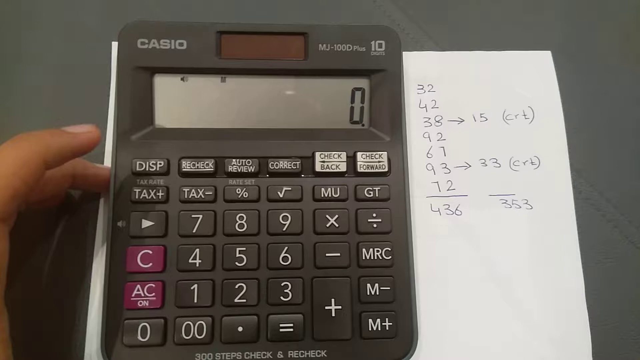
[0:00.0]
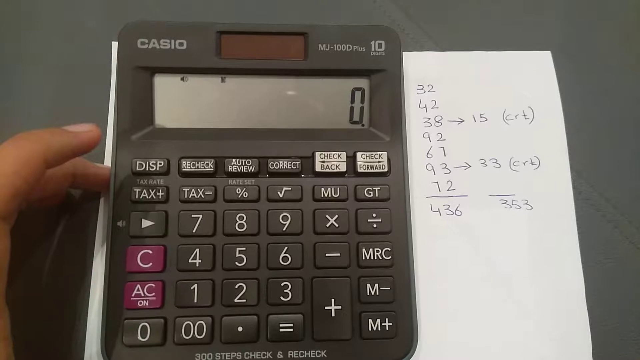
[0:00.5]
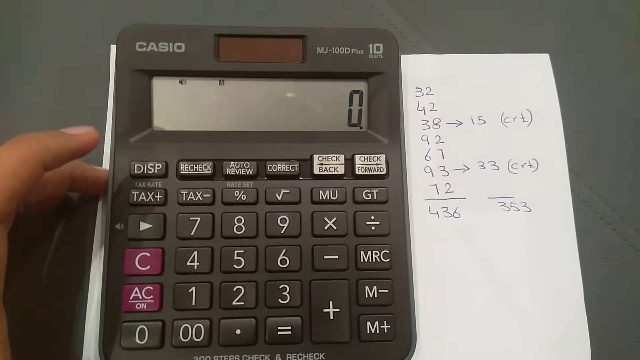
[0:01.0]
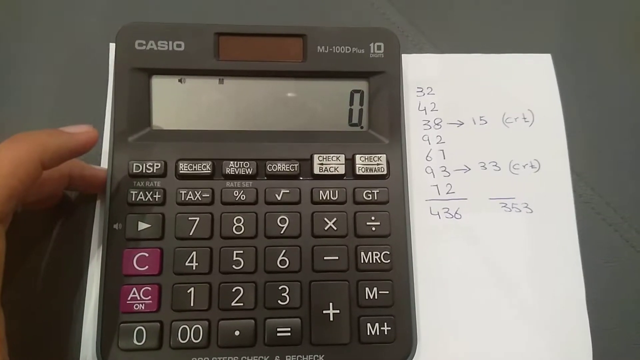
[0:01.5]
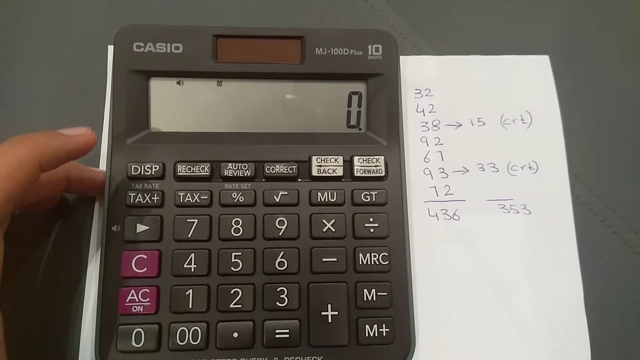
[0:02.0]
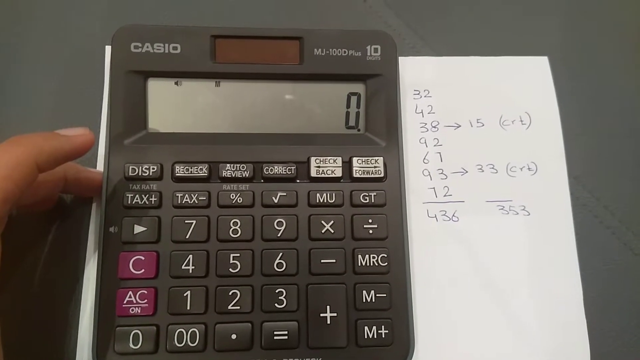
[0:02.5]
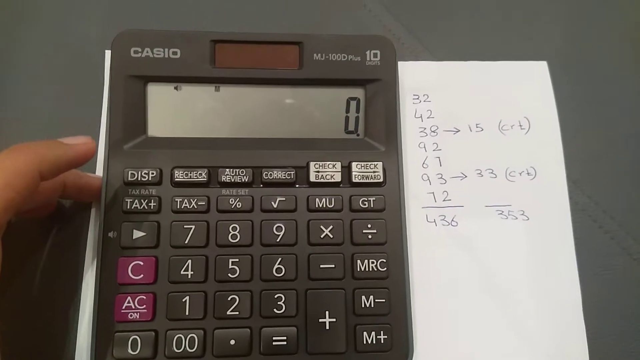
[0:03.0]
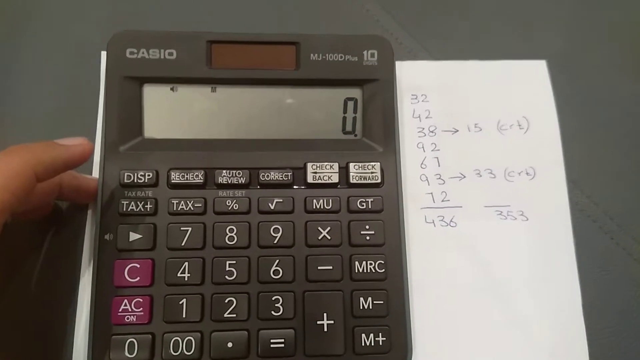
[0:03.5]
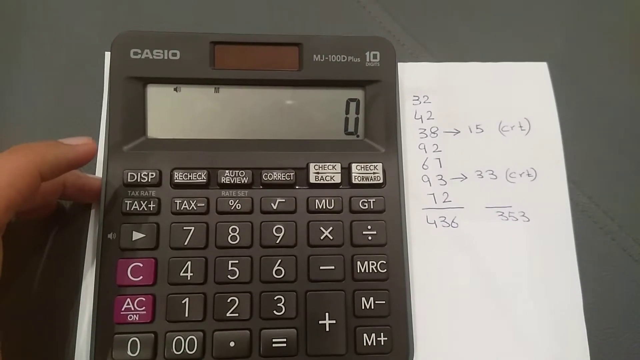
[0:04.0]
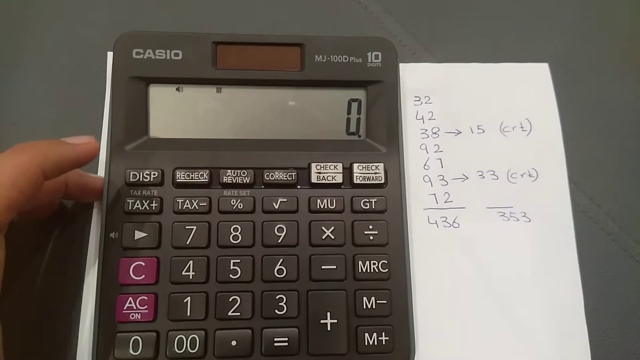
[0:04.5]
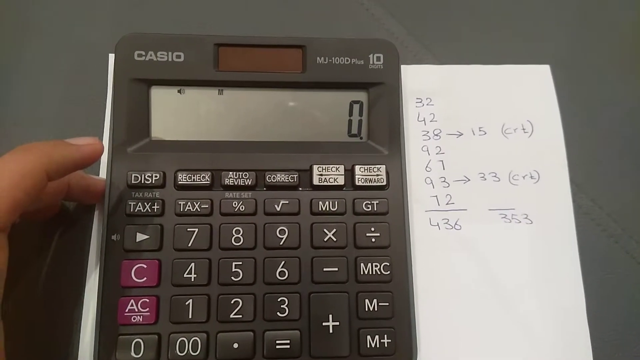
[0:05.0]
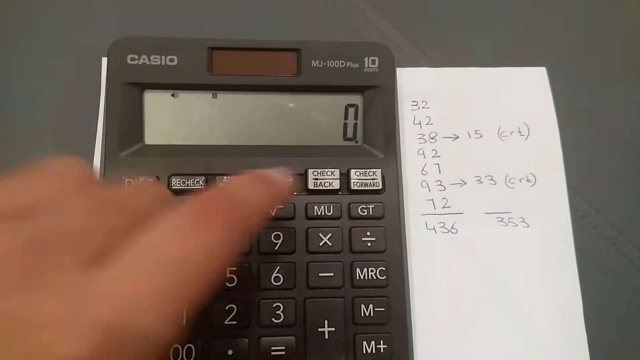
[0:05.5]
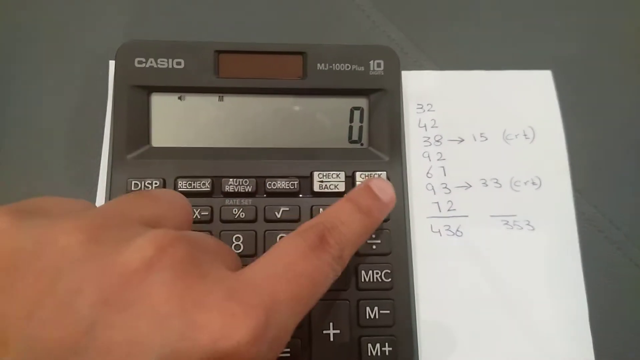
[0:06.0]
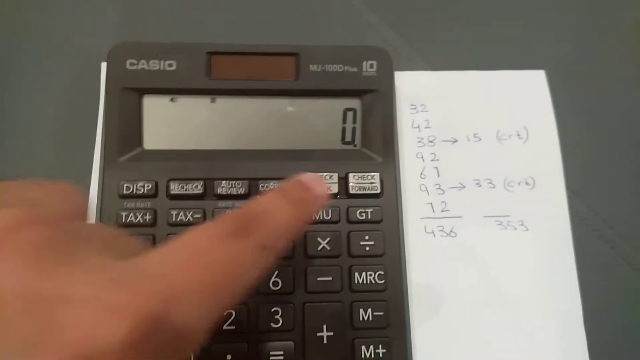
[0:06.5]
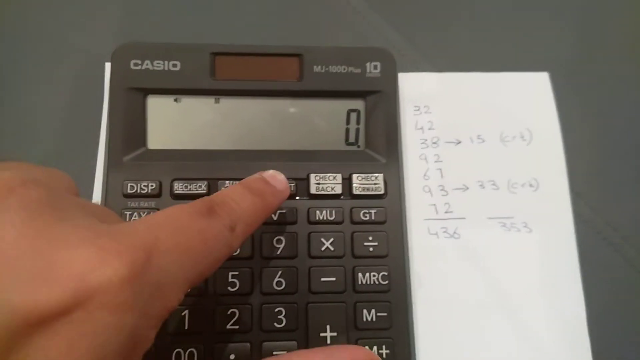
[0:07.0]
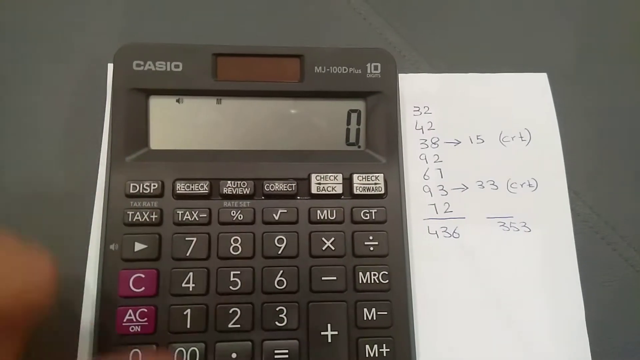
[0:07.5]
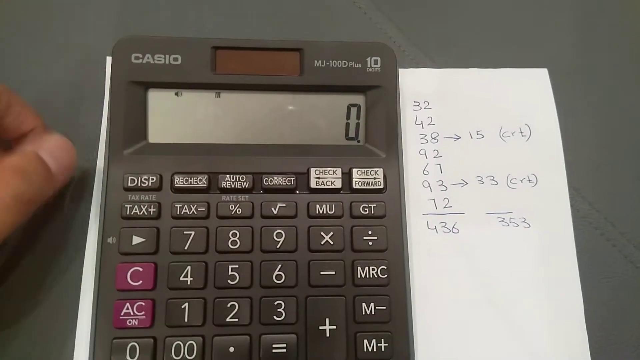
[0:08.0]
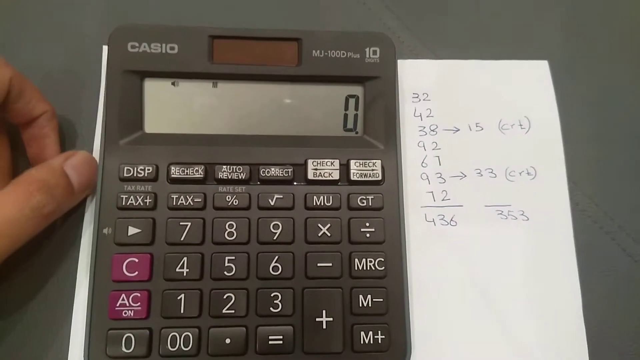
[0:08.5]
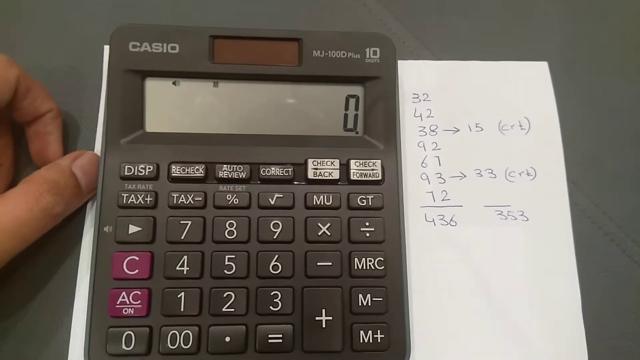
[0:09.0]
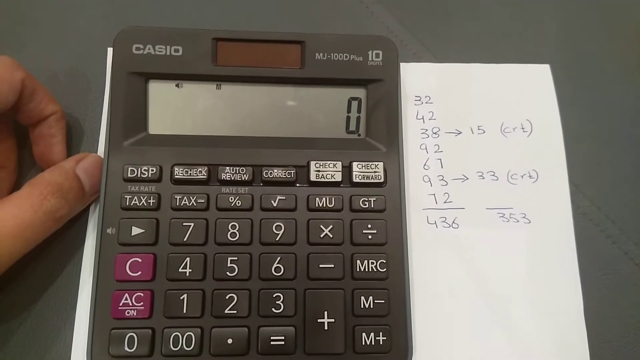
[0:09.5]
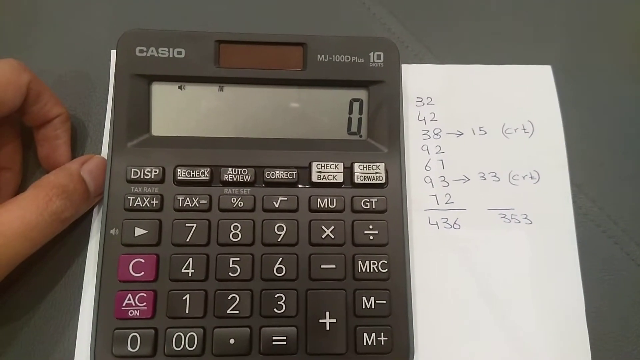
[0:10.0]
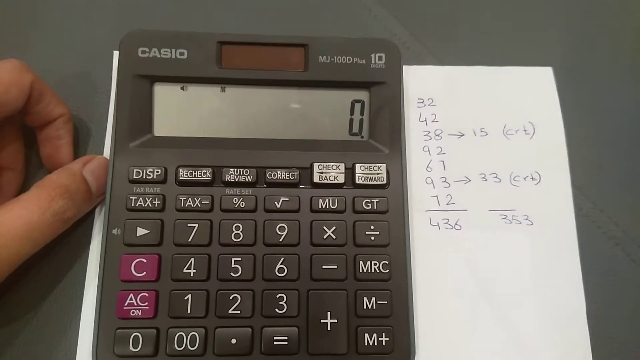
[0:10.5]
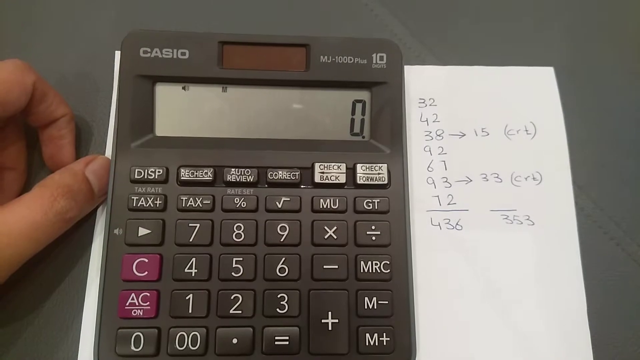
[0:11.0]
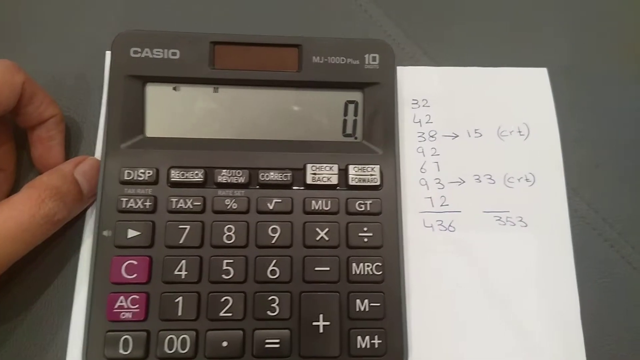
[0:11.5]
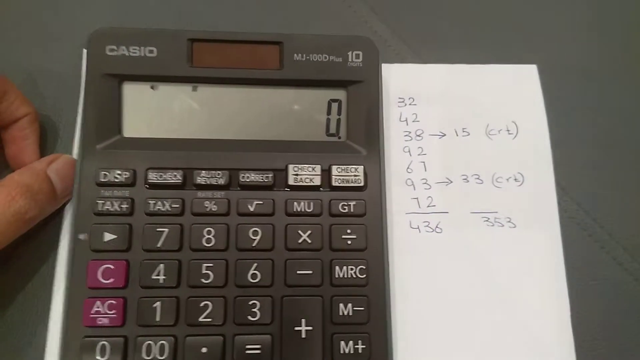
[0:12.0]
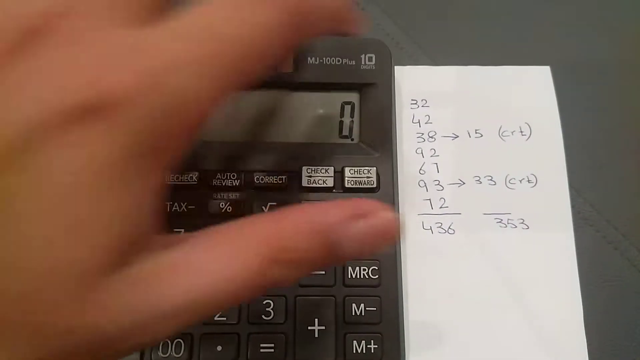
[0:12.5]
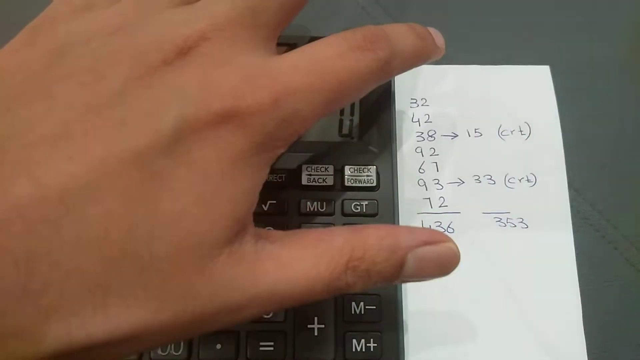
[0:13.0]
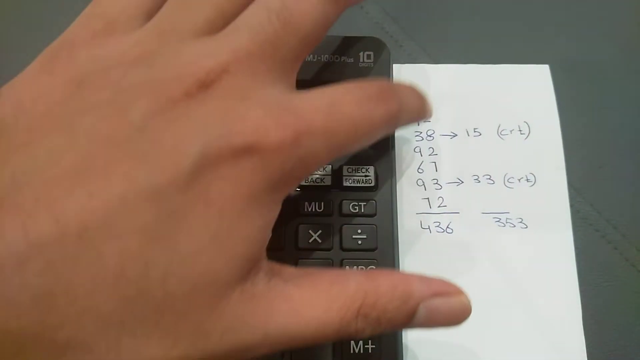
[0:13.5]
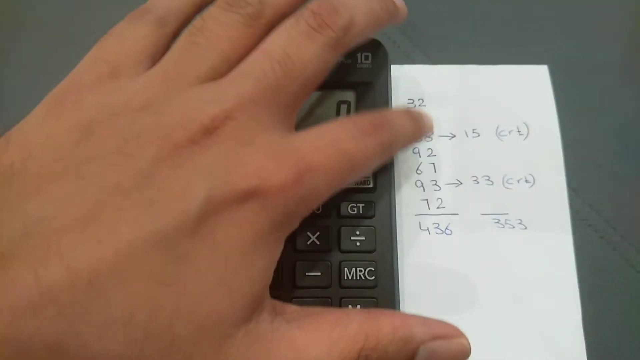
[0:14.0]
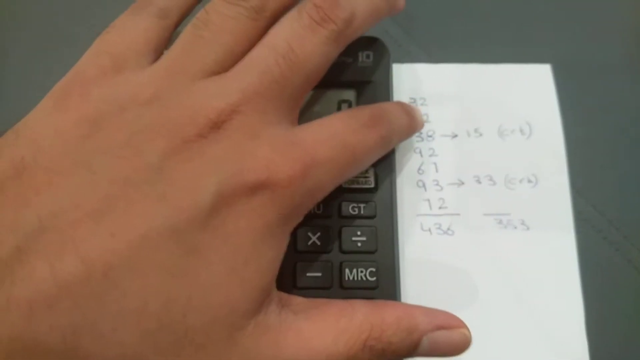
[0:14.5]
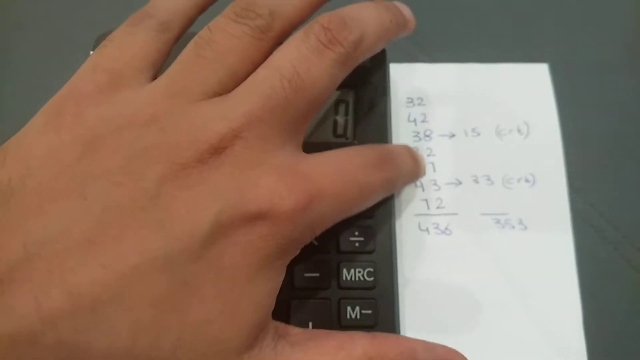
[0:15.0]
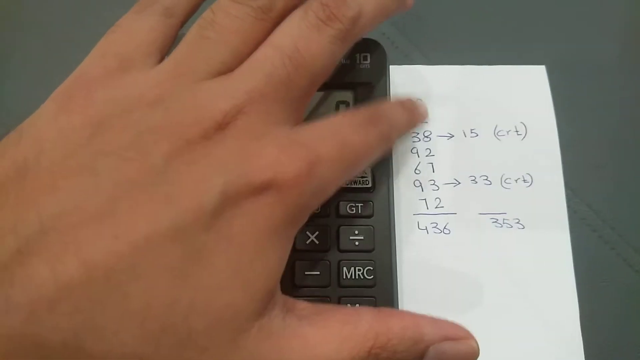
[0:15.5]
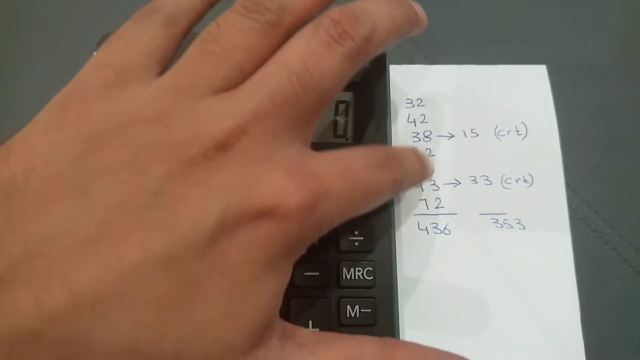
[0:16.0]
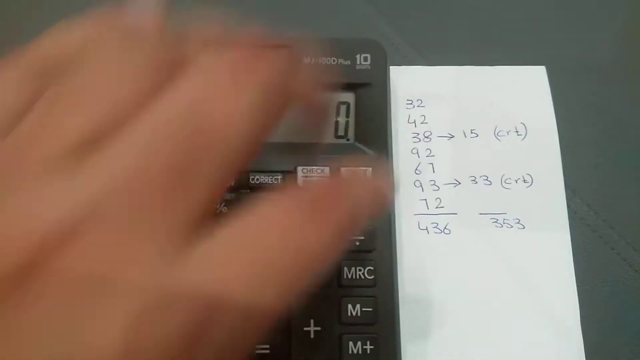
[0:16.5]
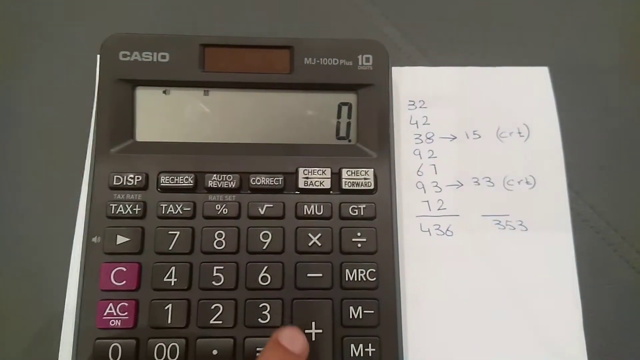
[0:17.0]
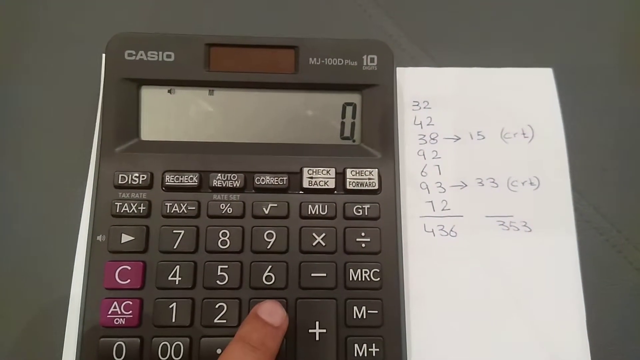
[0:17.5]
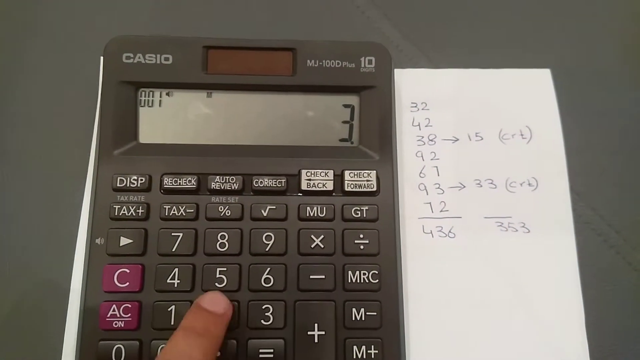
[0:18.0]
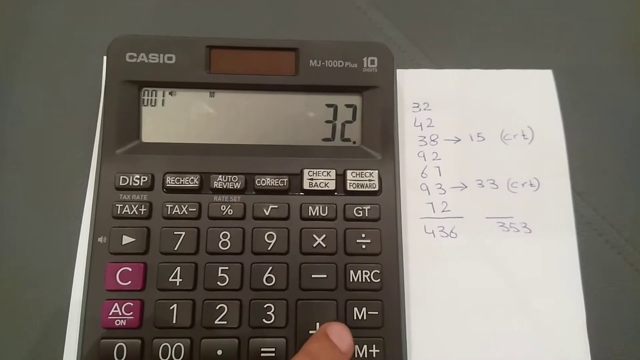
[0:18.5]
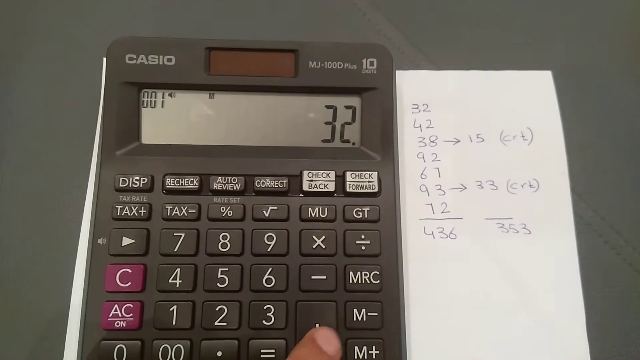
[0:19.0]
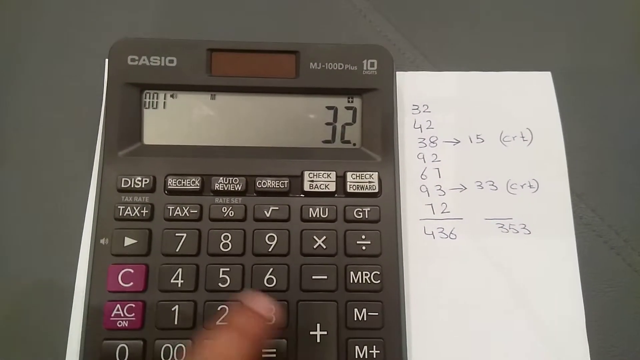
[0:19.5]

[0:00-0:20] A large black digital calculator, which is solar-powered, is laying on a gray surface. At the top, in the middle, there is a long rectangular red box. To the left is the word "Casio", and to the right it says "MJ-1000 Plus" followed by the number 10. Someone's hand is on the left side of the calculator, with just the fingers visible. On the right side of the calculator is a white sheet of paper. The hand comes across the top row of buttons, puts a finger over the check forward button, and then over the correct button. The person then starts typing in the numbers on the list. The first number on the list is 32, so they type in 32. The other numbers on the list include 42, 38, 92, 61, 93, and 72.